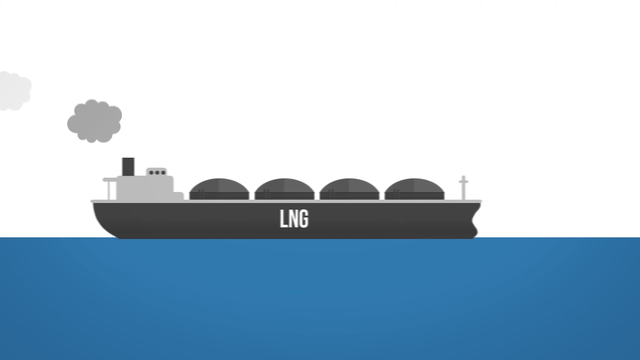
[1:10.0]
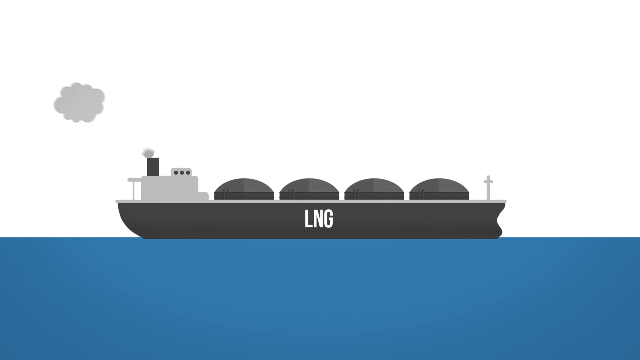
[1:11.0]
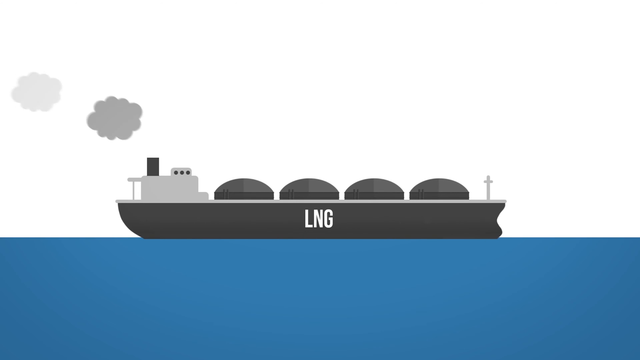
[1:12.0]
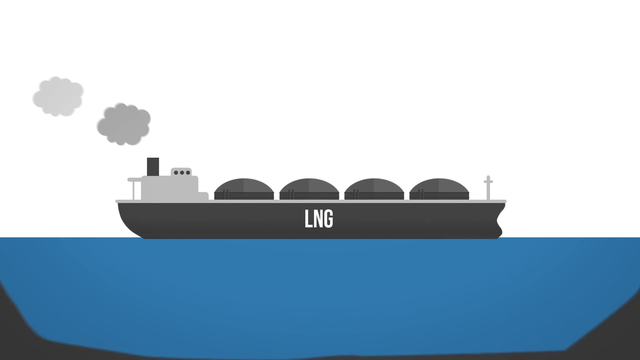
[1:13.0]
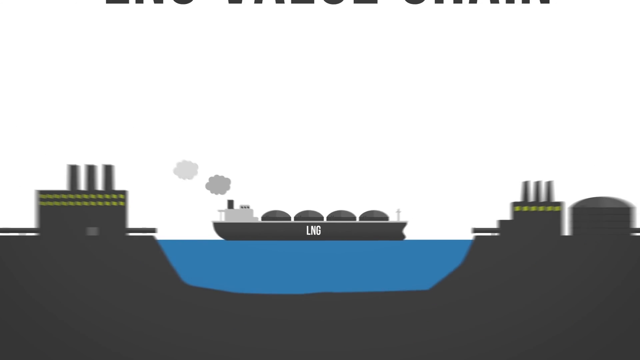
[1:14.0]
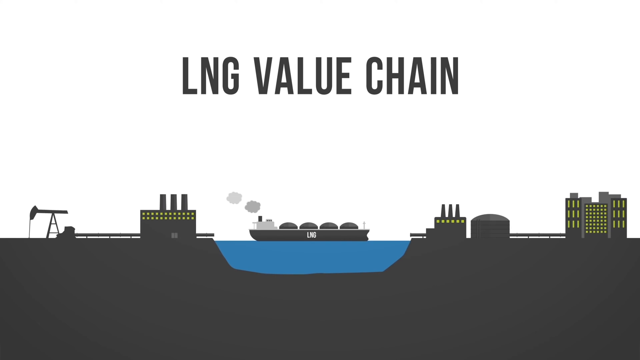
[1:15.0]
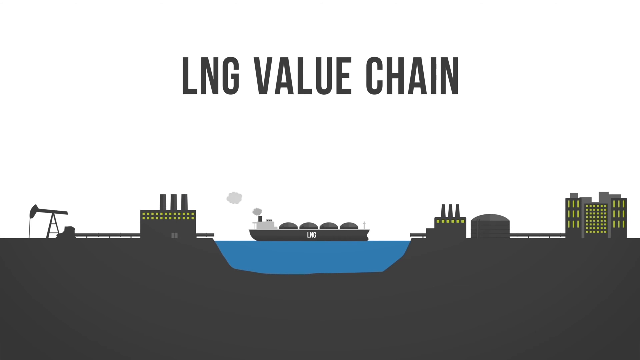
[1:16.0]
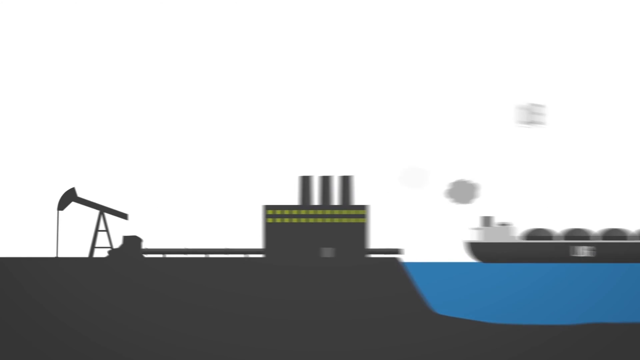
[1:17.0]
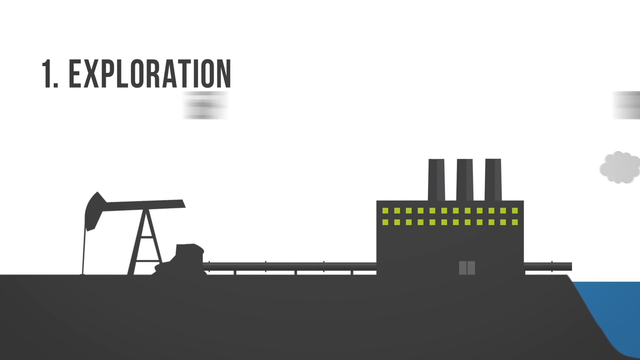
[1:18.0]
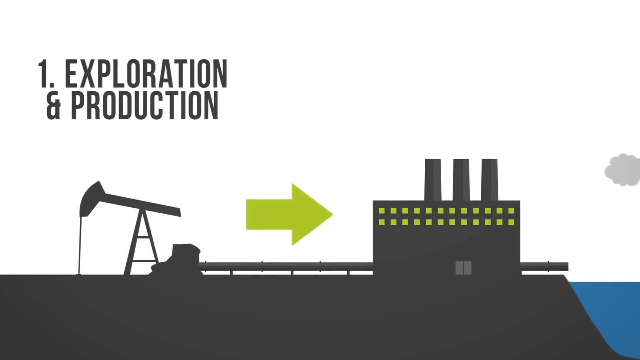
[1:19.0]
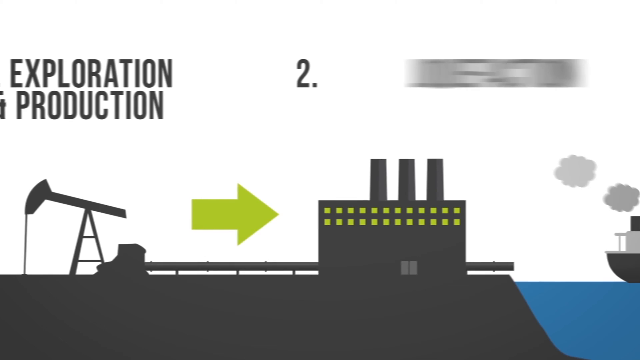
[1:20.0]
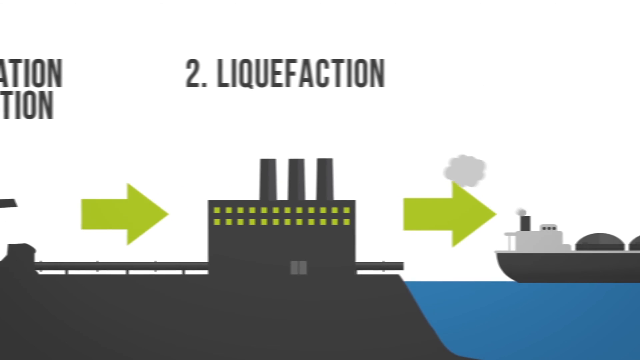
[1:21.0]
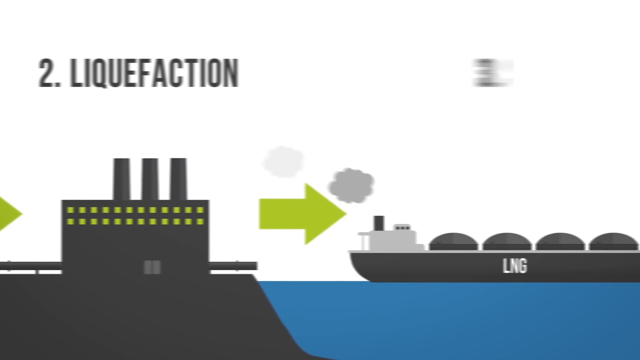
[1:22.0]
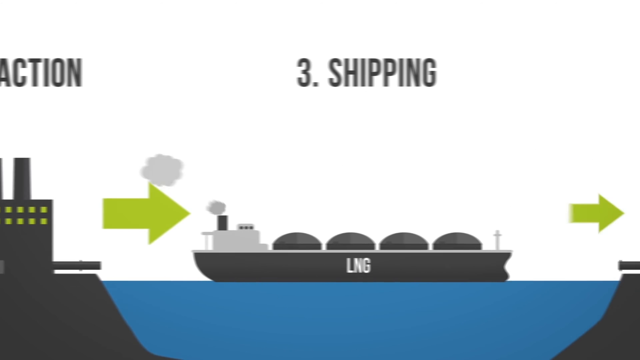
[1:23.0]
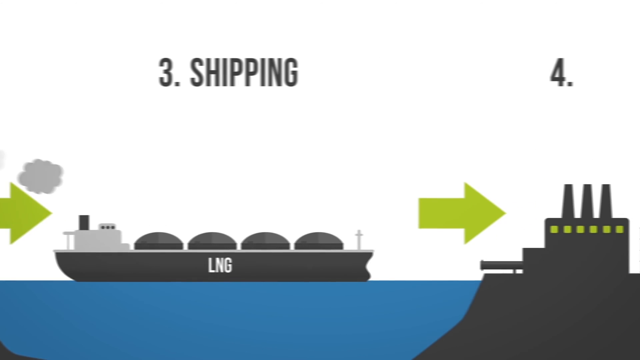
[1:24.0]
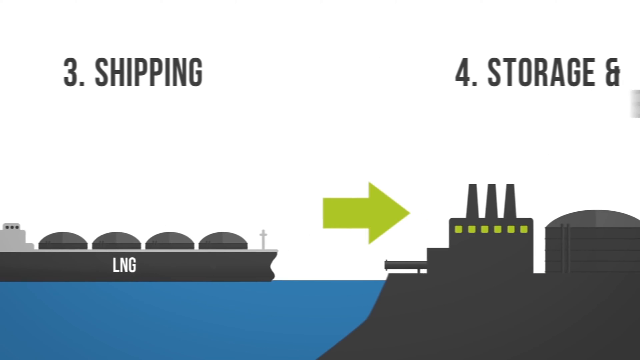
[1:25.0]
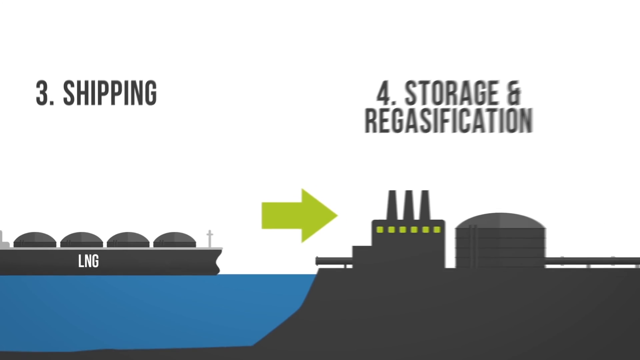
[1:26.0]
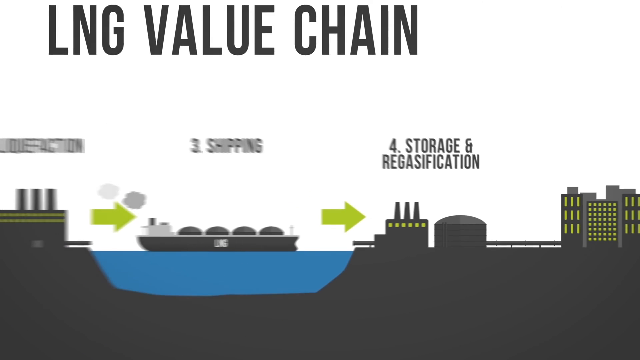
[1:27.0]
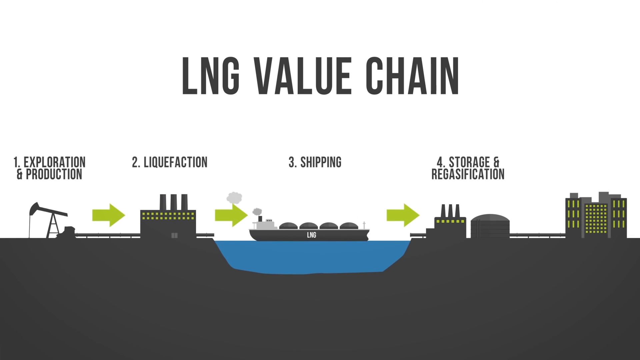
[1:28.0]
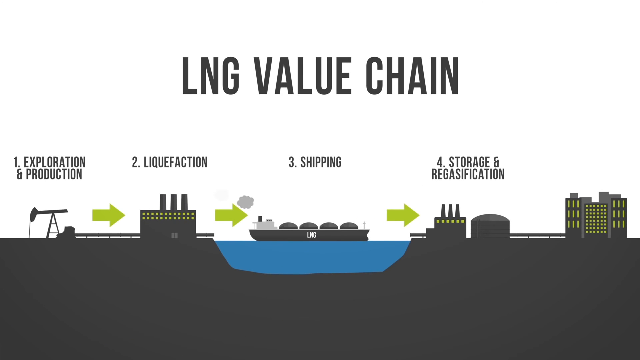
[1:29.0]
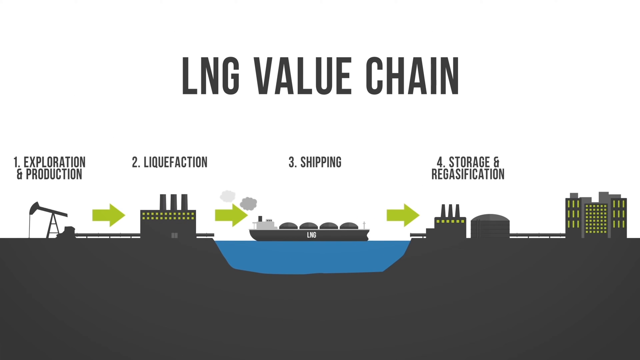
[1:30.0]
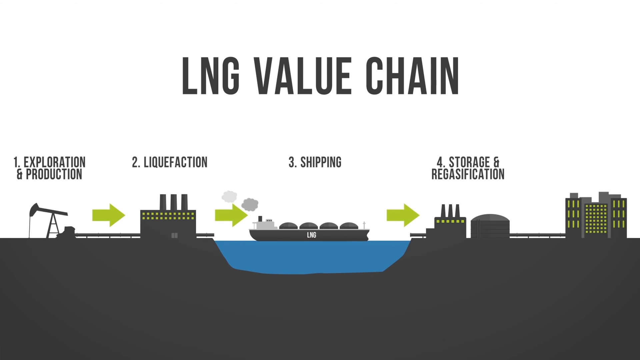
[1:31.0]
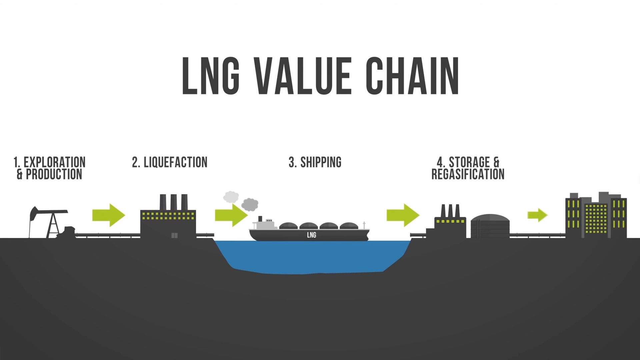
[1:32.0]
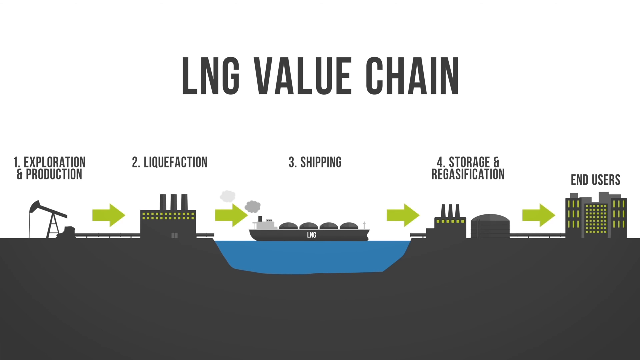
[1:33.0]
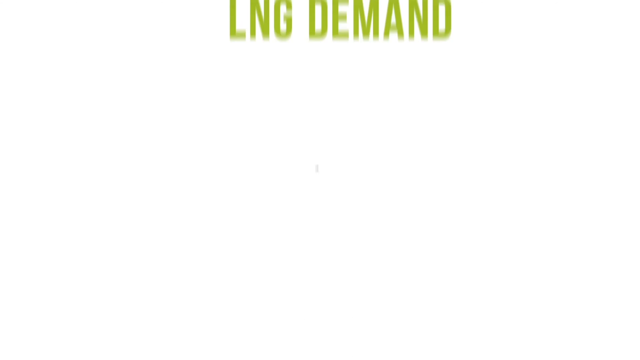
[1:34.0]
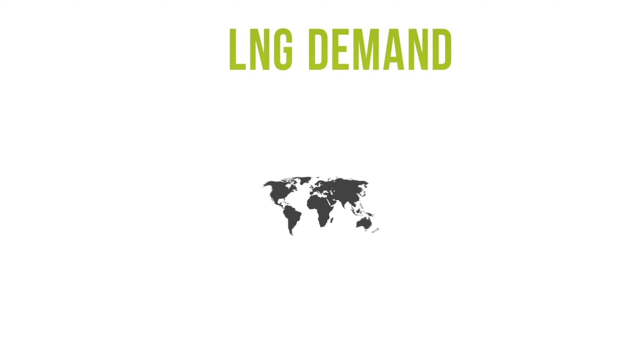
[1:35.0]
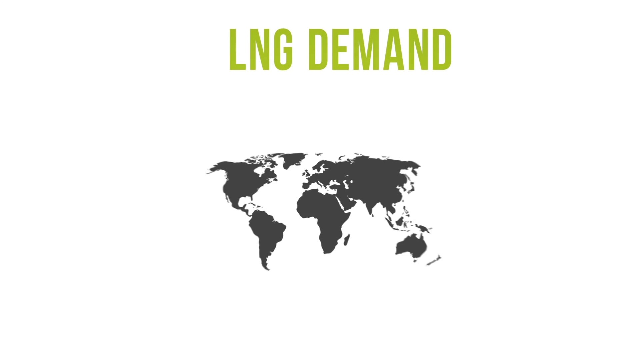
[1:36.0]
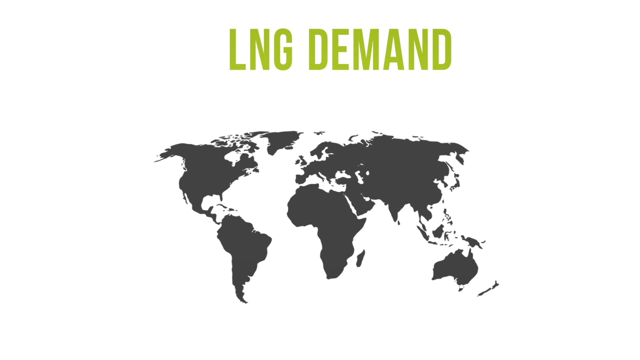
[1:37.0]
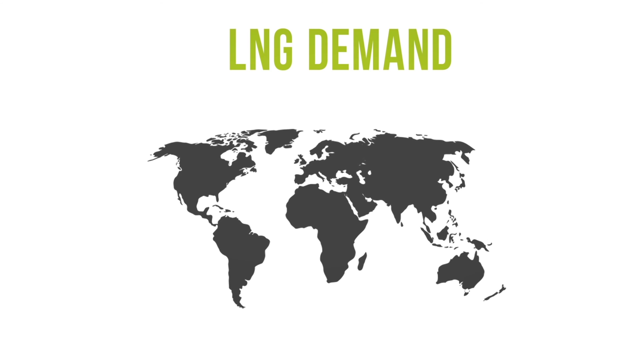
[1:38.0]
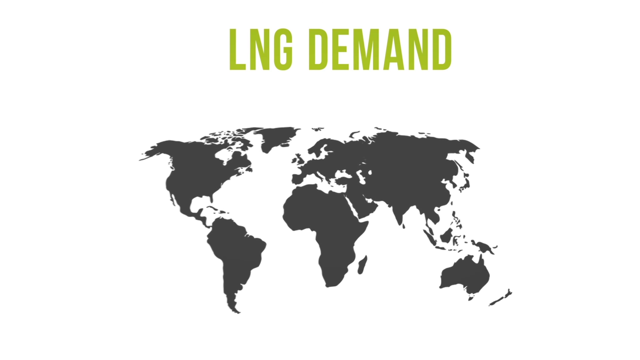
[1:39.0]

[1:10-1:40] The ship is on the water with "LNG" on its side, apparently standing for liquefied natural gas. Text reads "LNG value chain". The ship is still on the water, and outside there is what looks like oil refinery facilities. Numbered steps appear: "1" "exploration and production", "2" "liquefication", "3" "shipping", "4" "storage and regasification", and "5" "end users". Text then reads "LNG demand" with a map showing all seven continents.